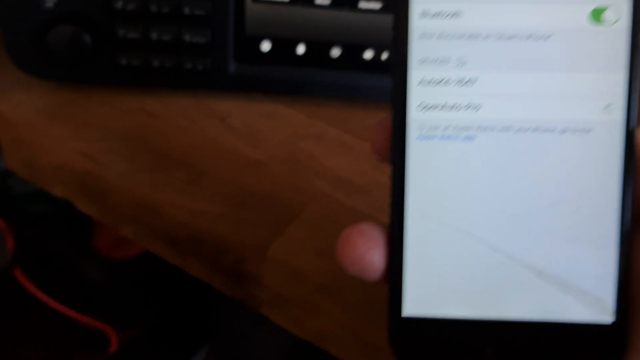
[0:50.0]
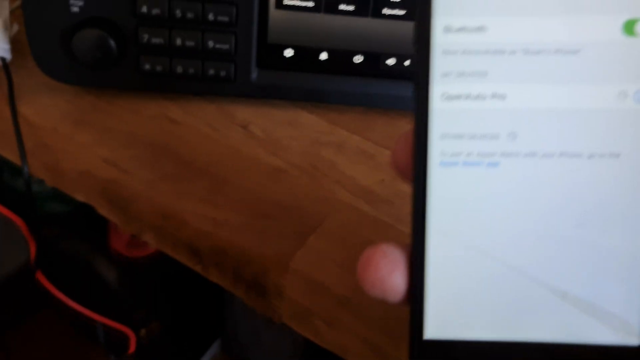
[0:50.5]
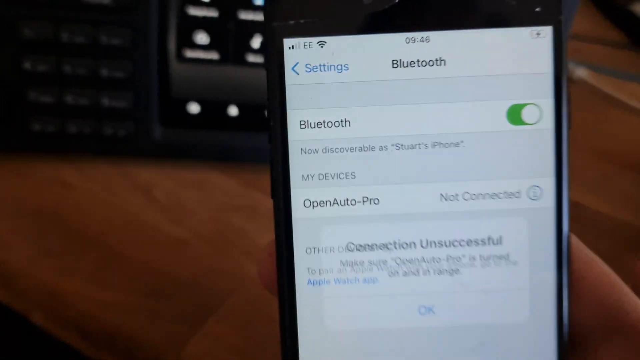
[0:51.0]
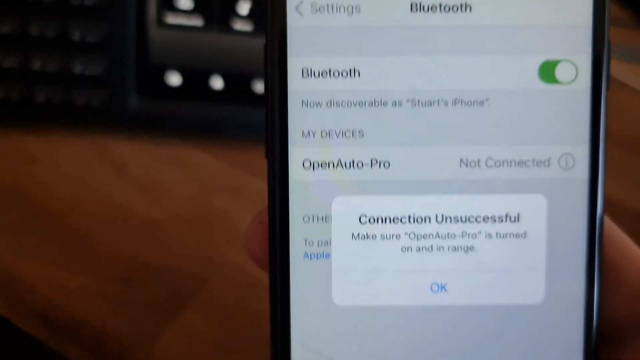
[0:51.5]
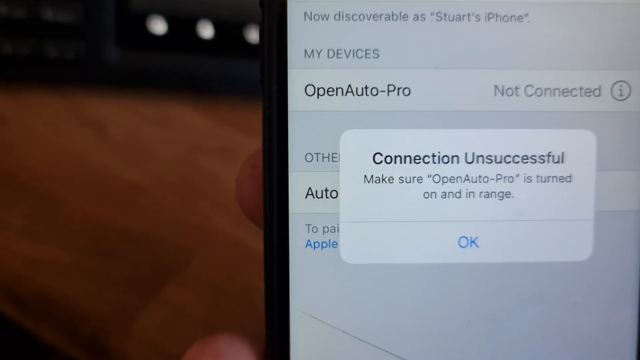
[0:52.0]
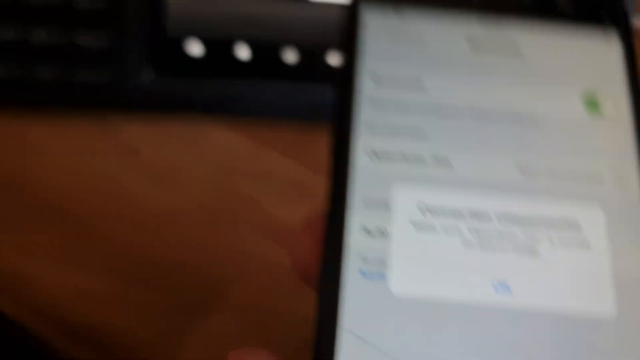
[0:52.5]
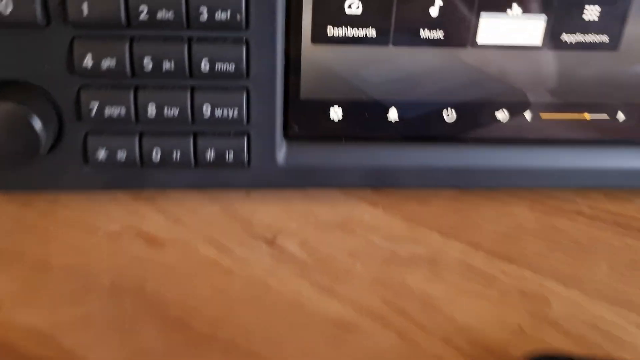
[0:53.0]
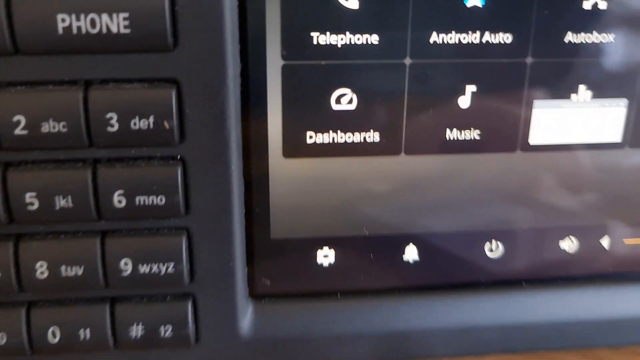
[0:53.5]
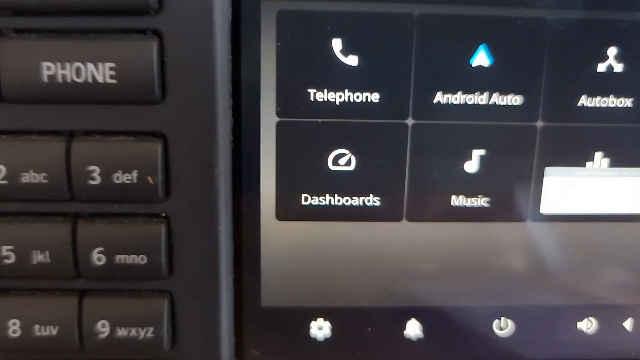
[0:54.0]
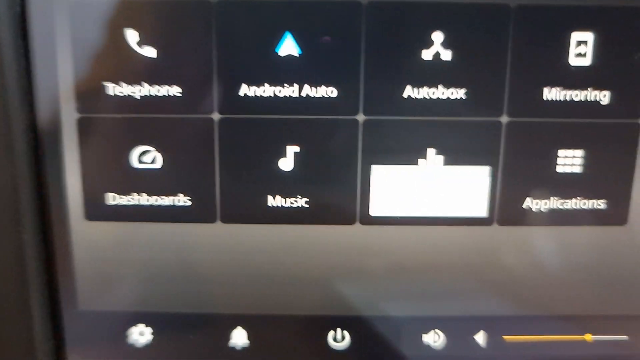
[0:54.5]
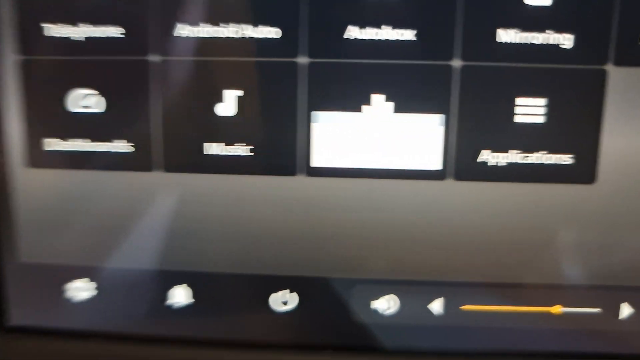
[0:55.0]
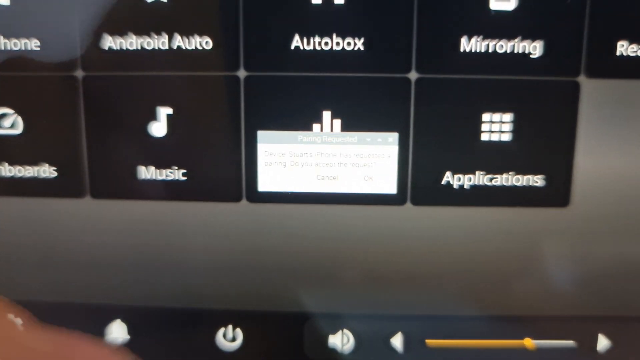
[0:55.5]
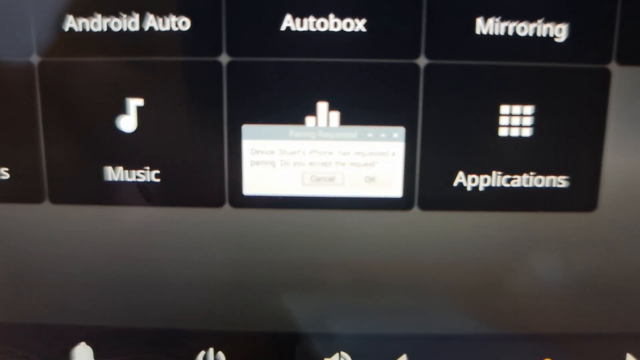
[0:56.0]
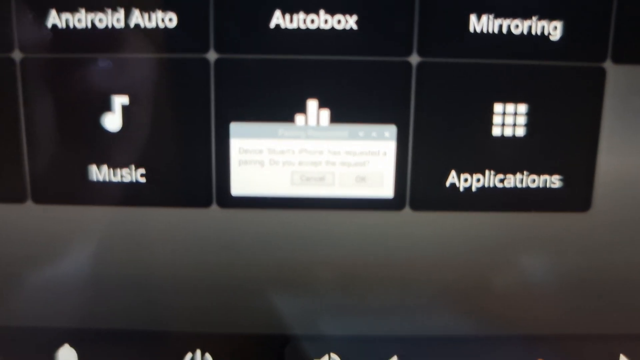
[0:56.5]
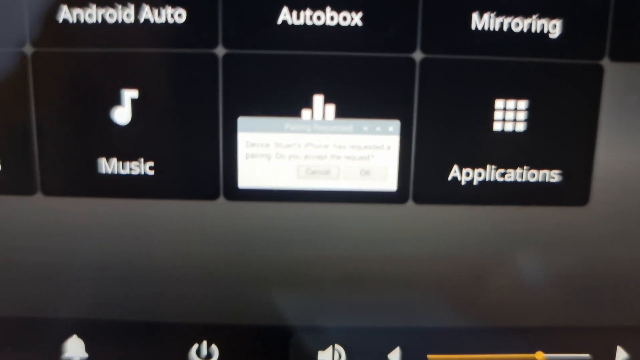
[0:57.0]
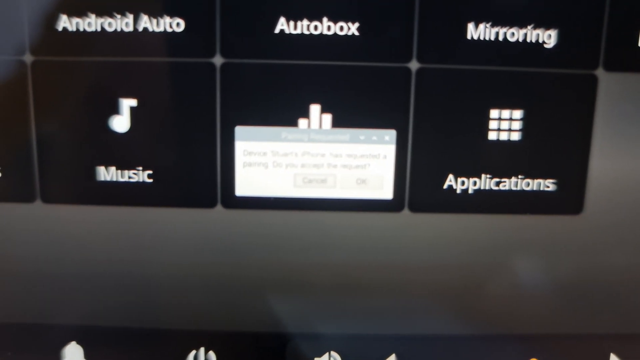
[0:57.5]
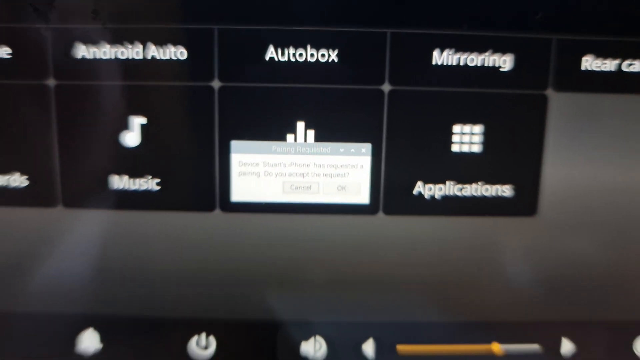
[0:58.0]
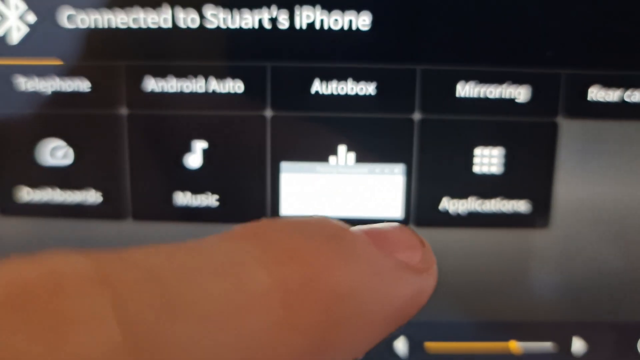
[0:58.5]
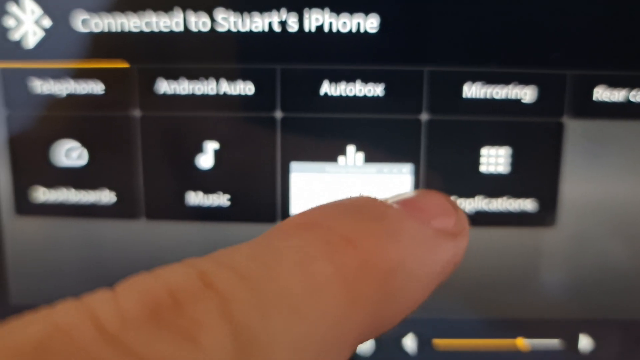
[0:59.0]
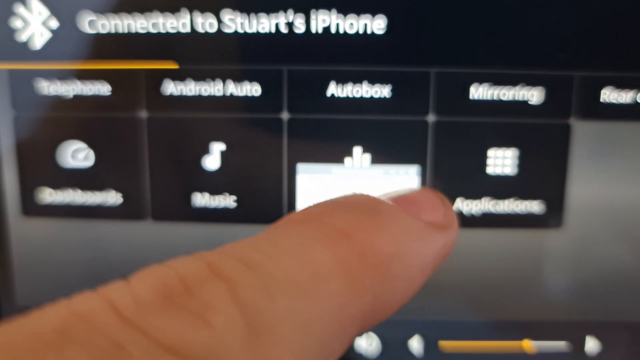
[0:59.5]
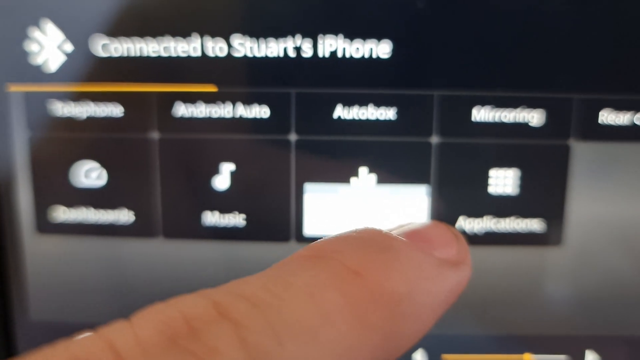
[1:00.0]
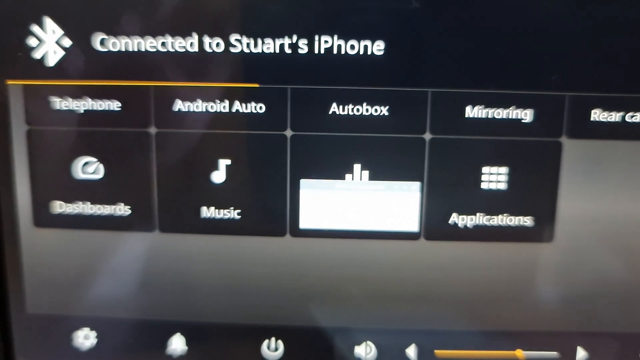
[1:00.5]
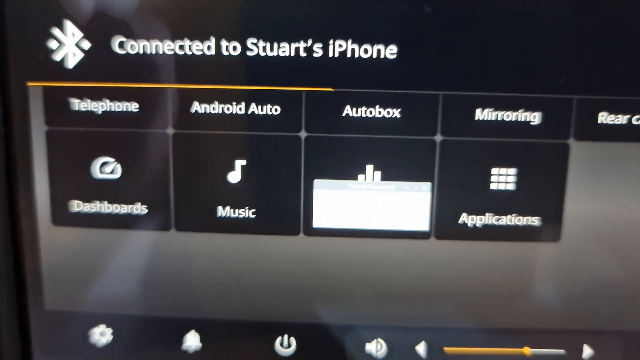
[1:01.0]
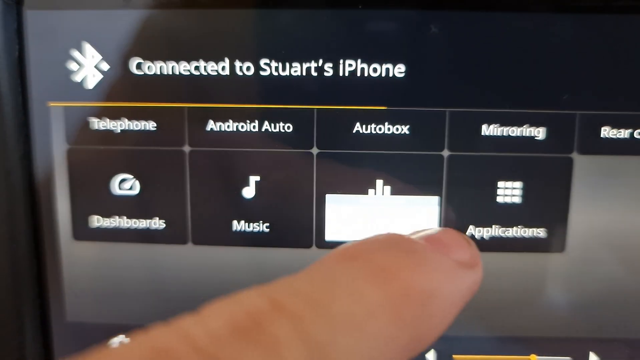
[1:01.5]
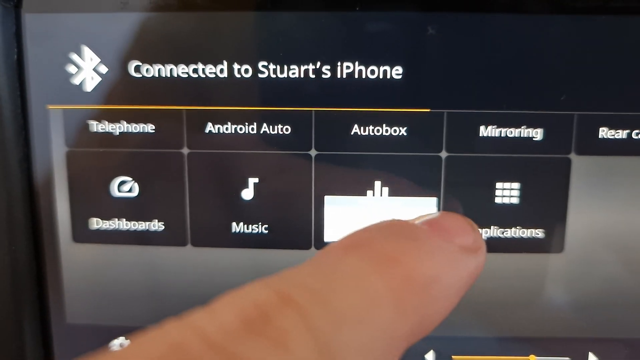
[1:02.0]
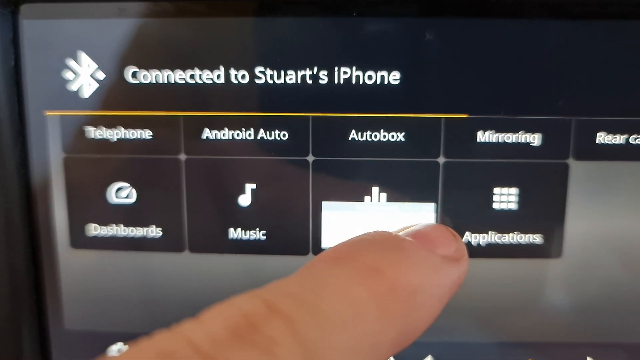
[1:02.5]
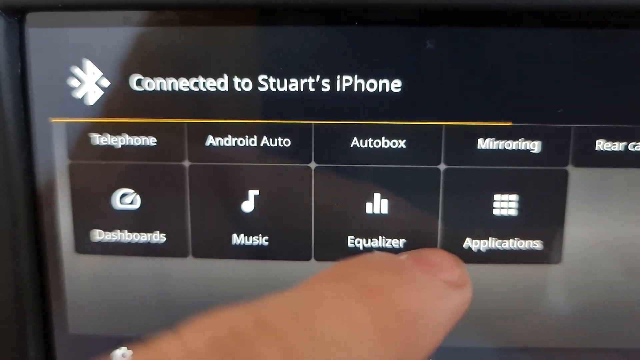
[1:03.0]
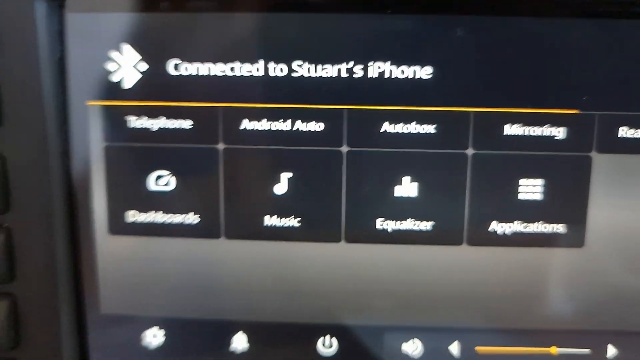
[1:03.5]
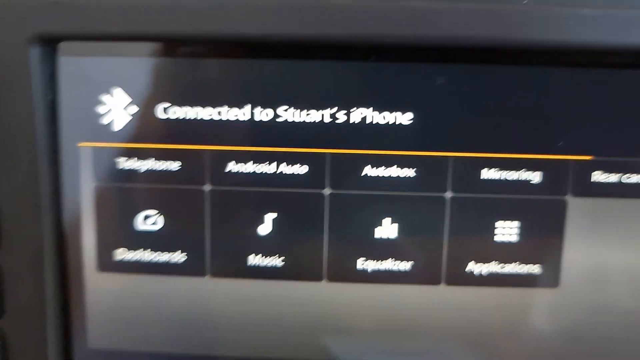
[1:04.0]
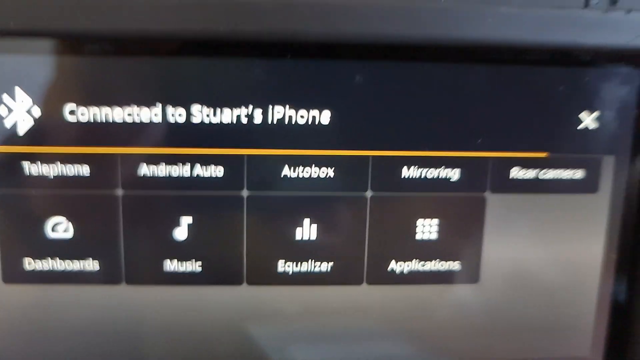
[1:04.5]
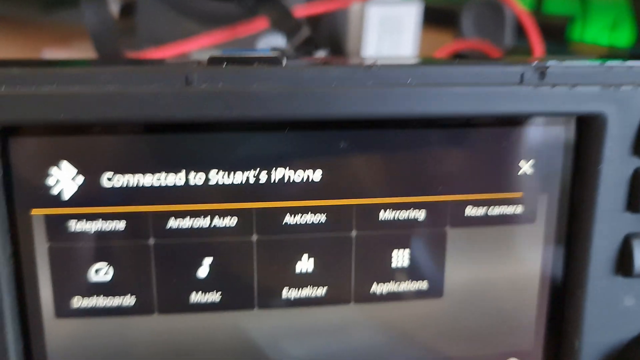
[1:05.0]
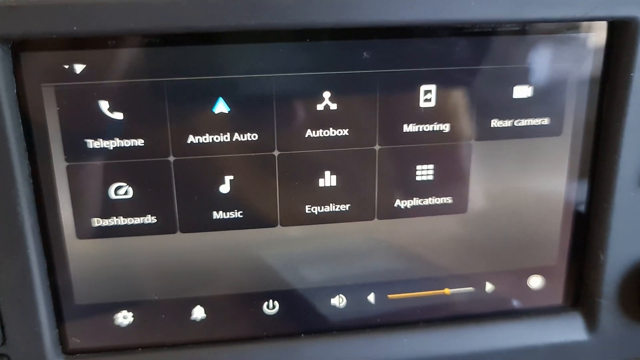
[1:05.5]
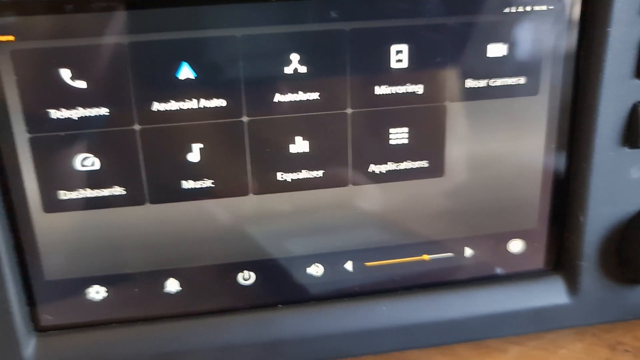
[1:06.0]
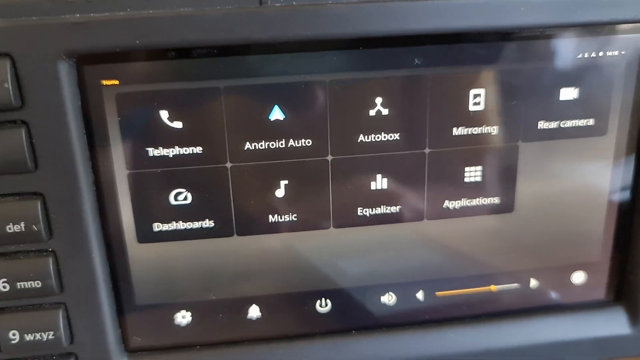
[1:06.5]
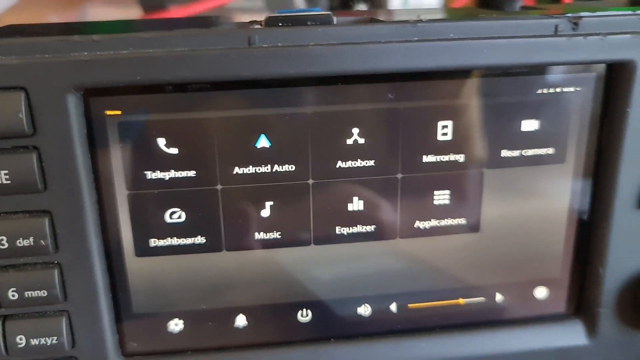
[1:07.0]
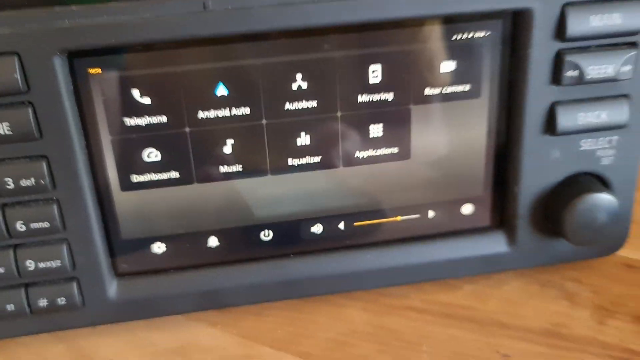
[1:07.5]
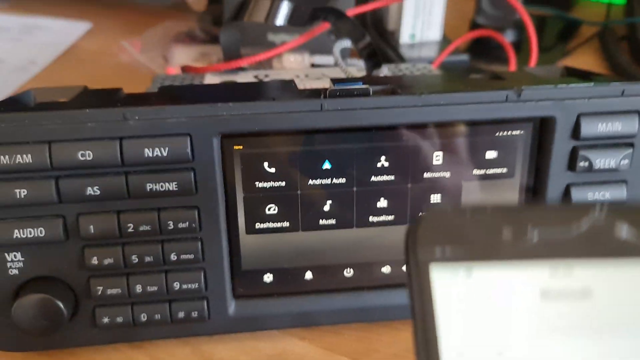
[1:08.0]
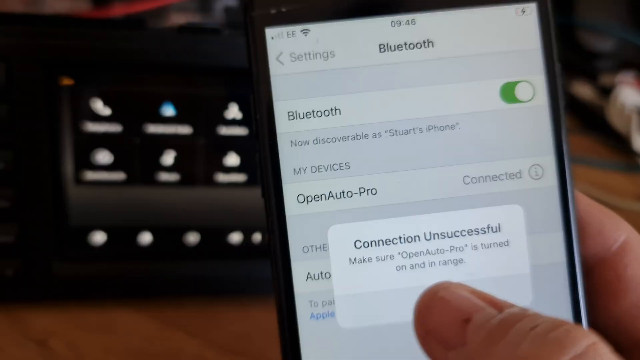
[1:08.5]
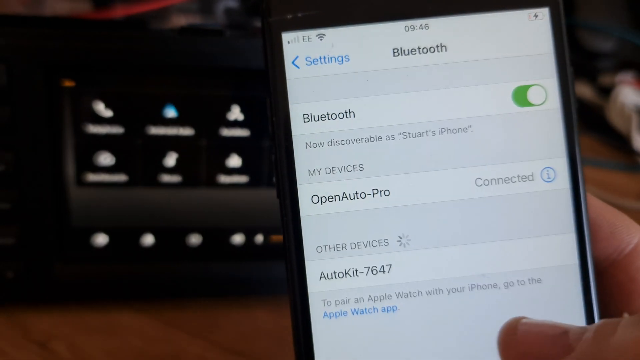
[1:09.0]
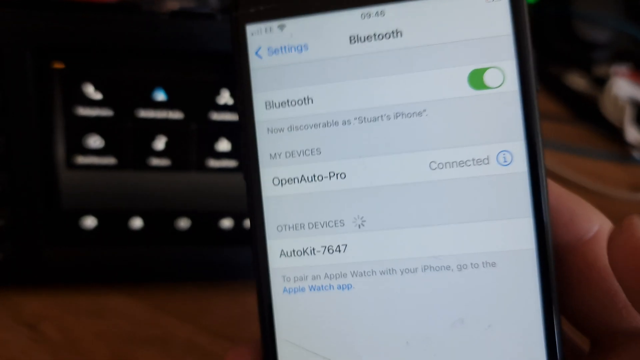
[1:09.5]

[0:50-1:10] "Connection unsuccessful" is shown, and something is not working on the car radio's screen. On the phone, the person taps, and it says "connection unsuccessful Make sure Open Auto Pro is turned on and in range"; the connection is apparently being attempted over Bluetooth and is not working. On the car radio screen, a Windows-like error dialog appears, but it is tiny, contained within the square of one of the nine function buttons, and illegible. The person clicks on it with his index finger to make it disappear. The car radio also says it is connected to "Stuart's iPhone", and then that message disappears from the screen.